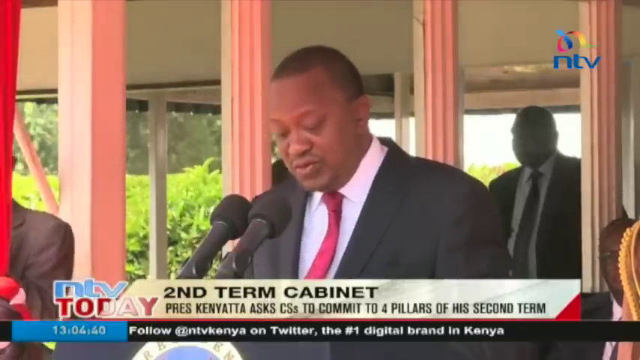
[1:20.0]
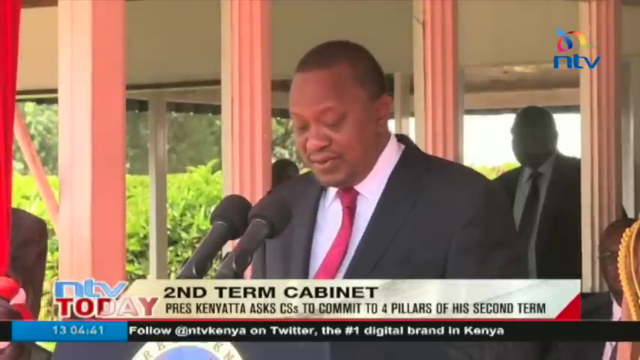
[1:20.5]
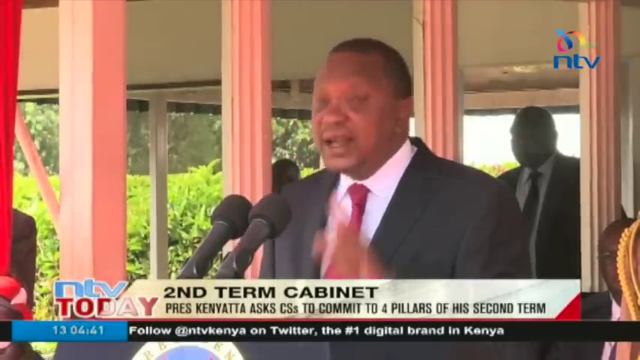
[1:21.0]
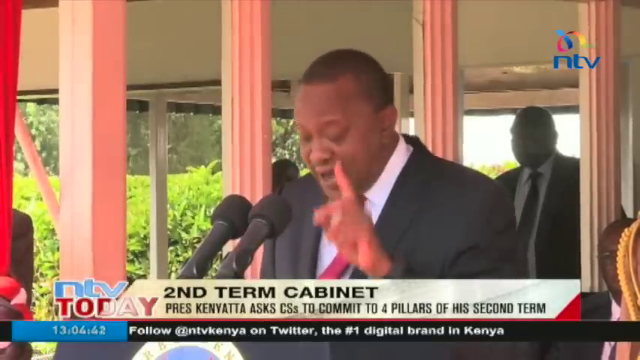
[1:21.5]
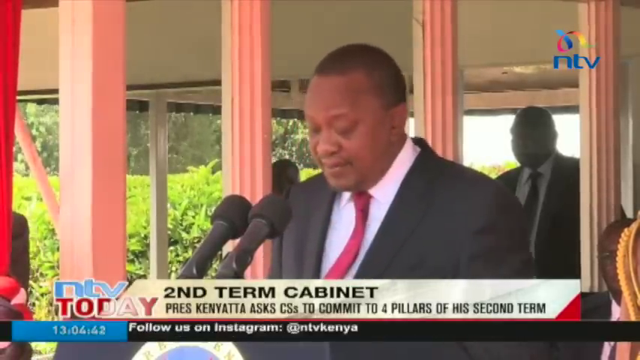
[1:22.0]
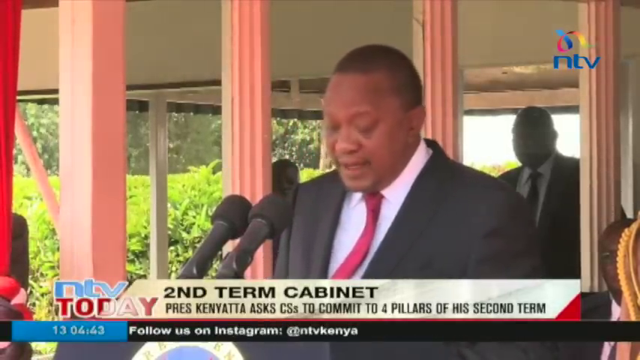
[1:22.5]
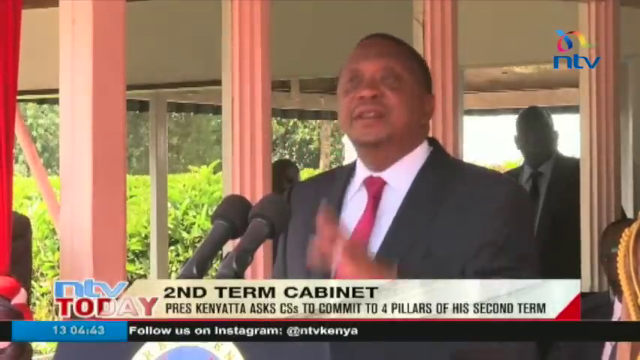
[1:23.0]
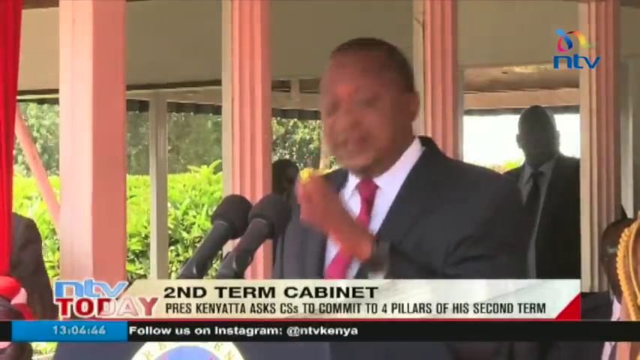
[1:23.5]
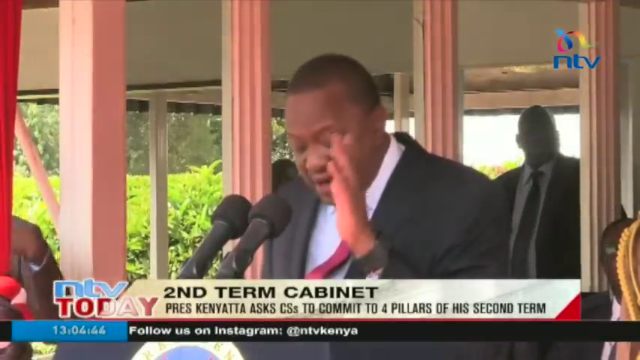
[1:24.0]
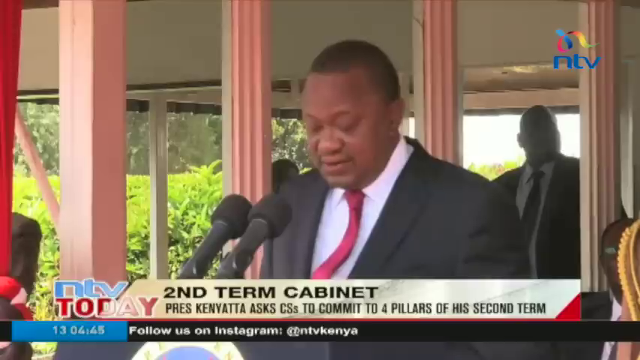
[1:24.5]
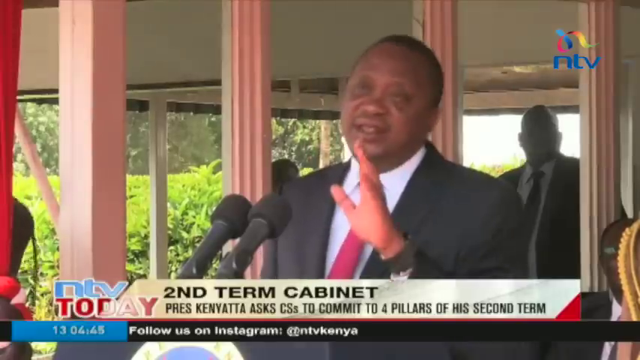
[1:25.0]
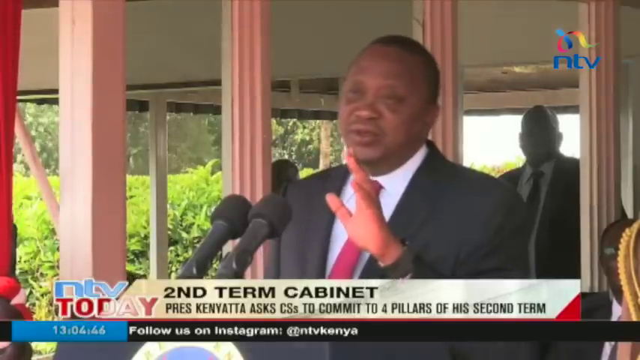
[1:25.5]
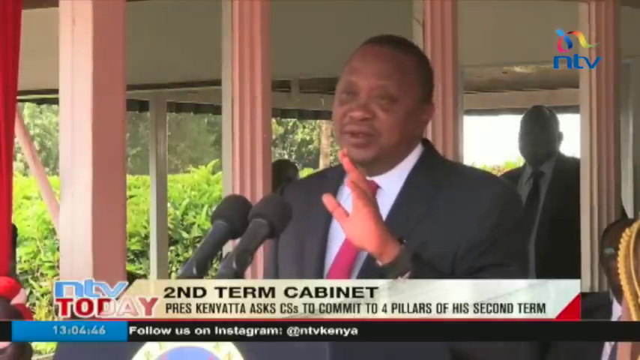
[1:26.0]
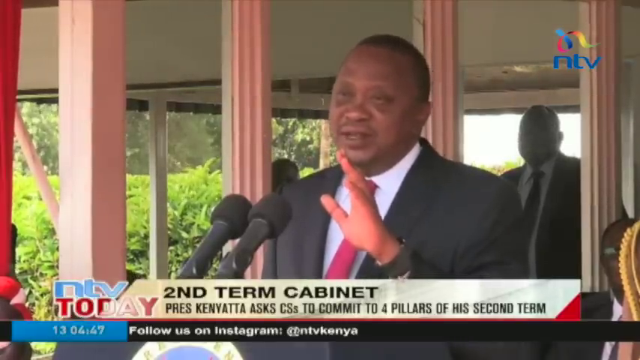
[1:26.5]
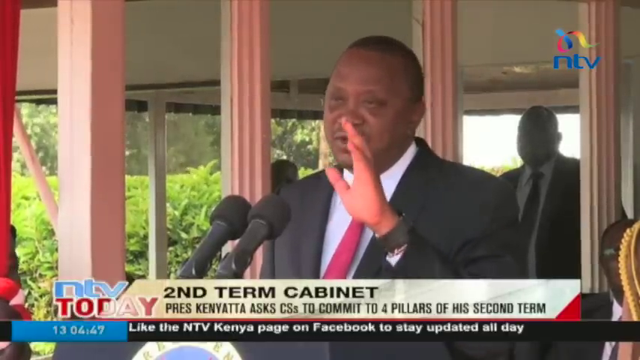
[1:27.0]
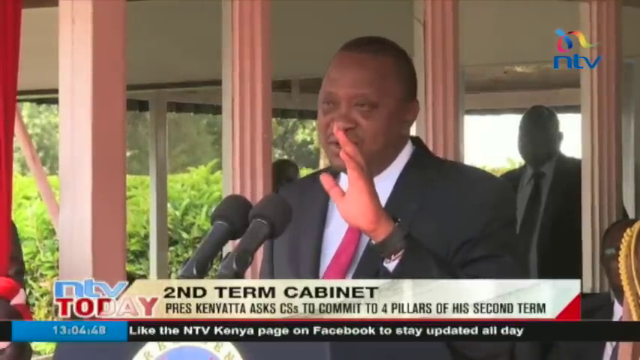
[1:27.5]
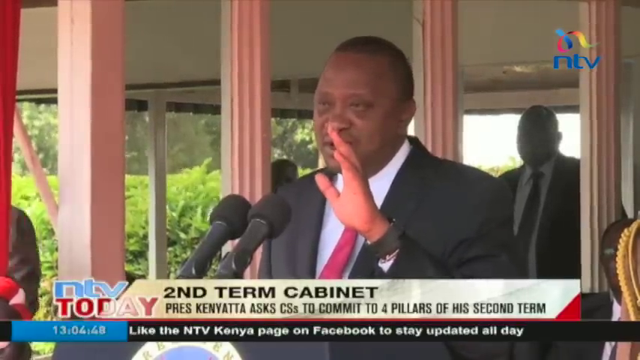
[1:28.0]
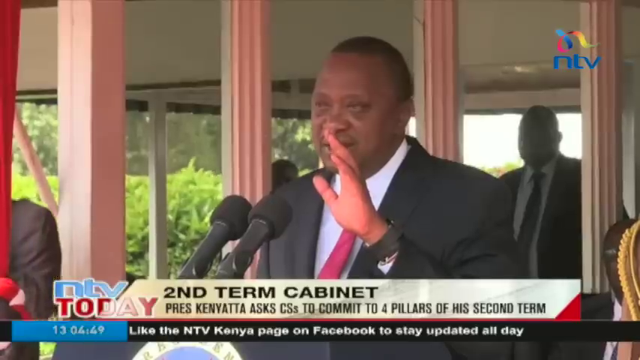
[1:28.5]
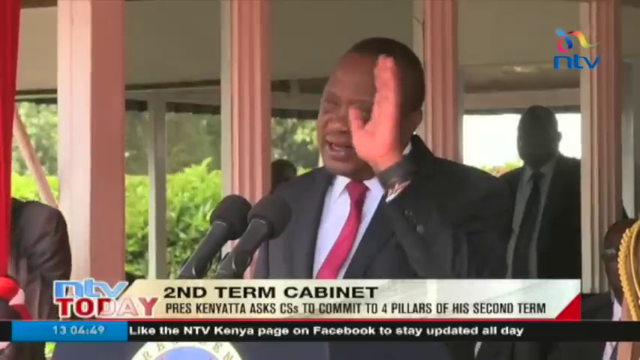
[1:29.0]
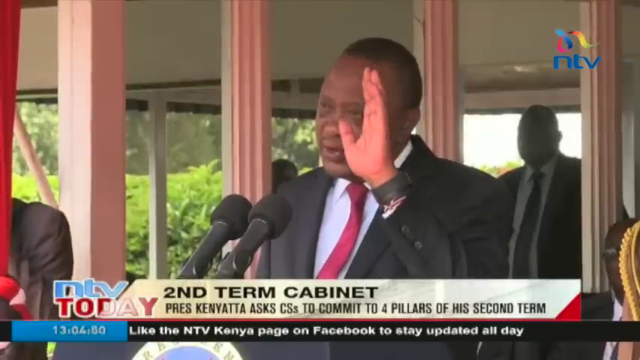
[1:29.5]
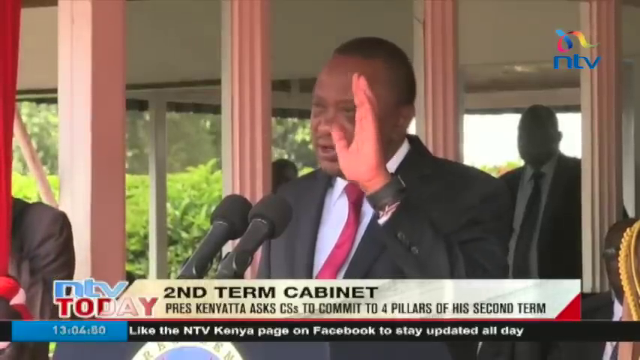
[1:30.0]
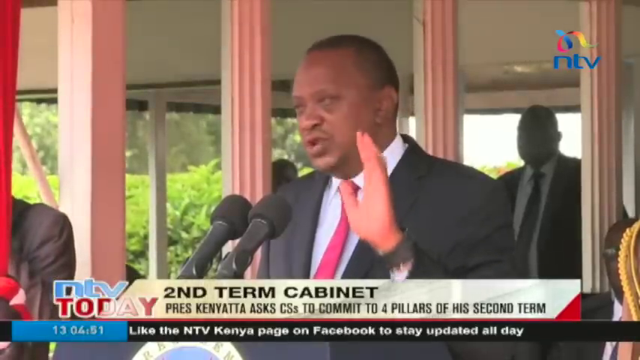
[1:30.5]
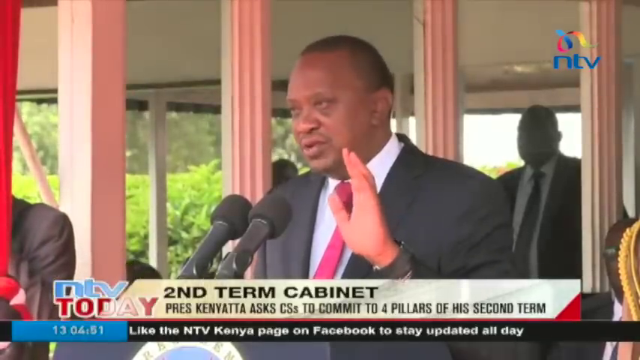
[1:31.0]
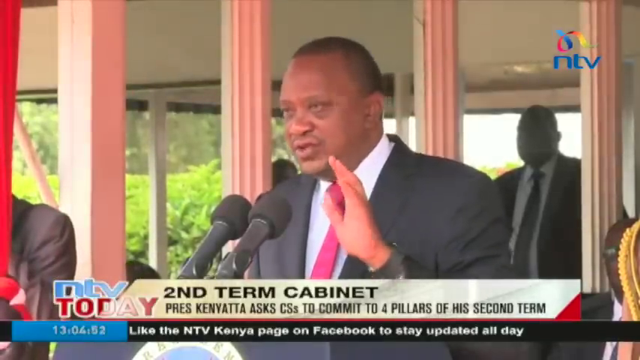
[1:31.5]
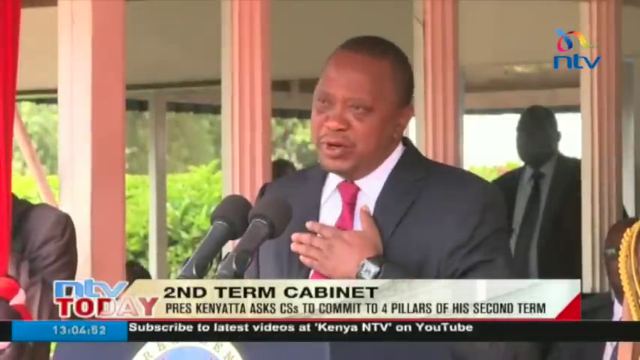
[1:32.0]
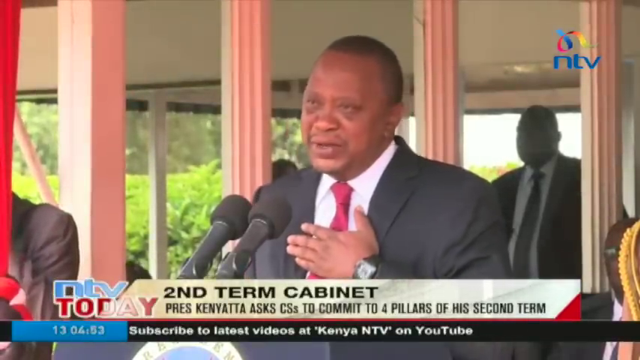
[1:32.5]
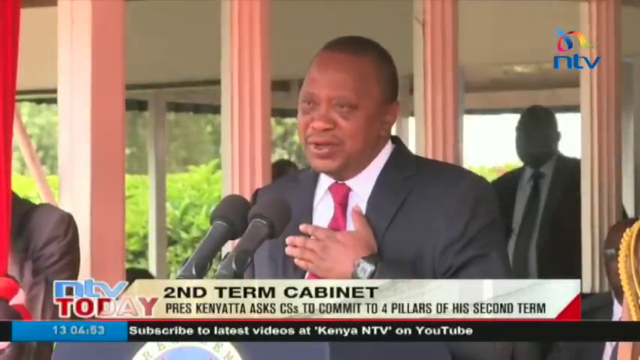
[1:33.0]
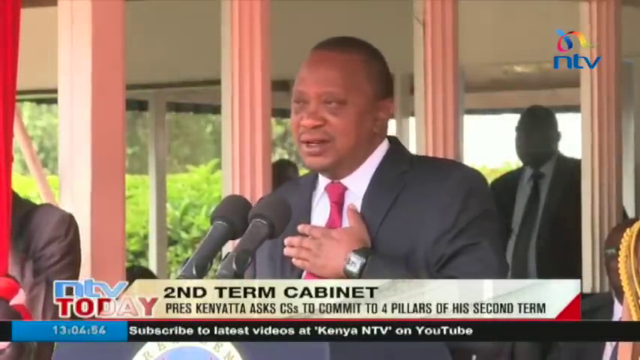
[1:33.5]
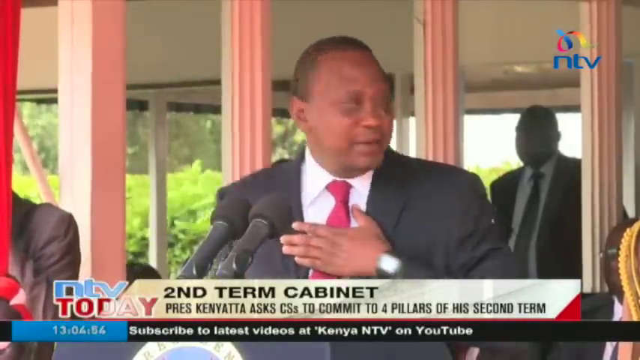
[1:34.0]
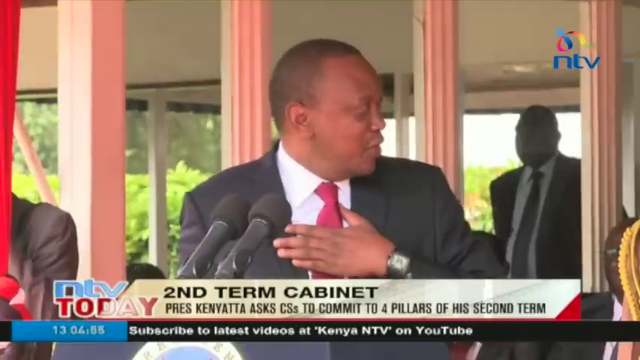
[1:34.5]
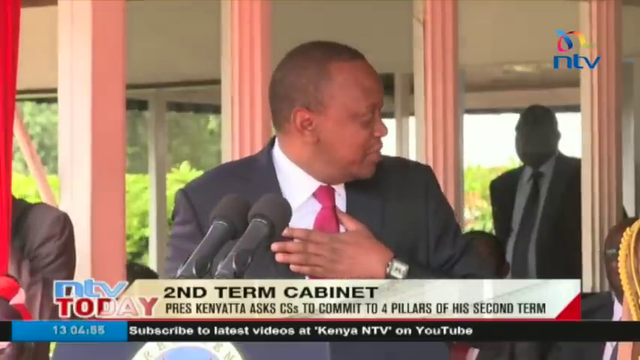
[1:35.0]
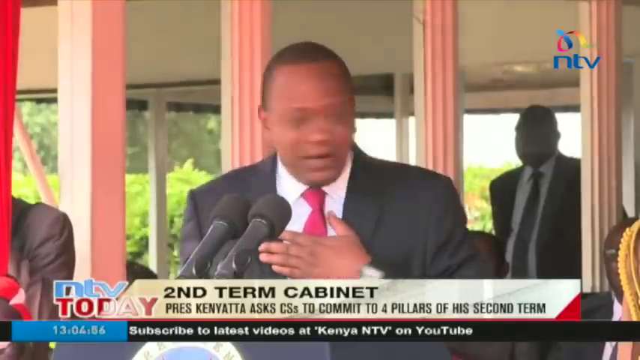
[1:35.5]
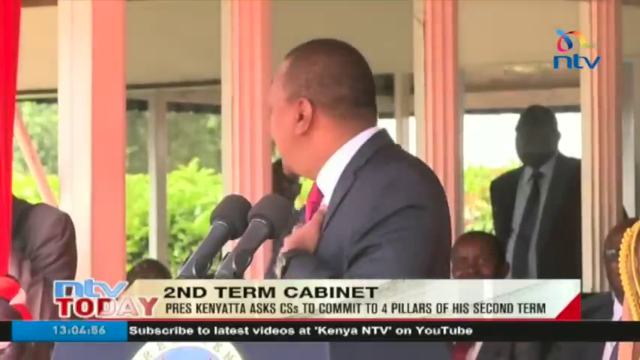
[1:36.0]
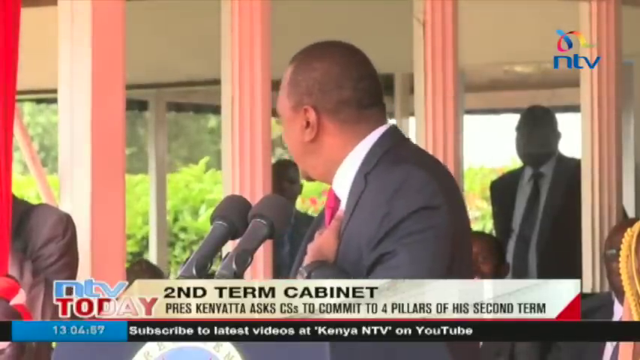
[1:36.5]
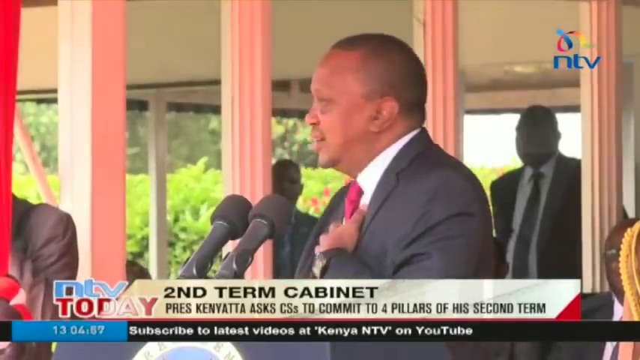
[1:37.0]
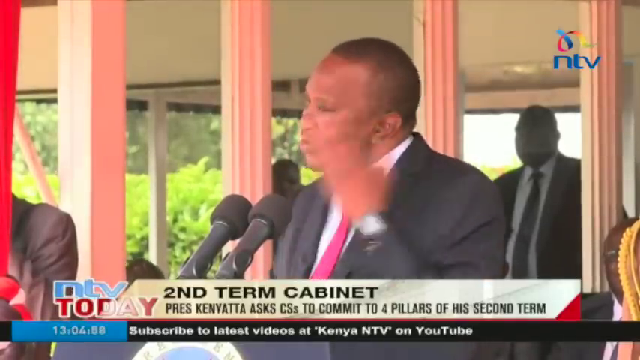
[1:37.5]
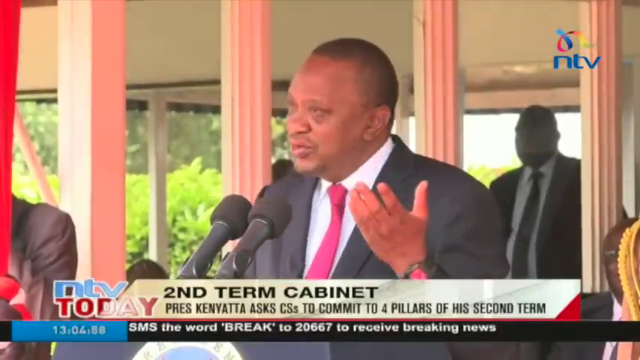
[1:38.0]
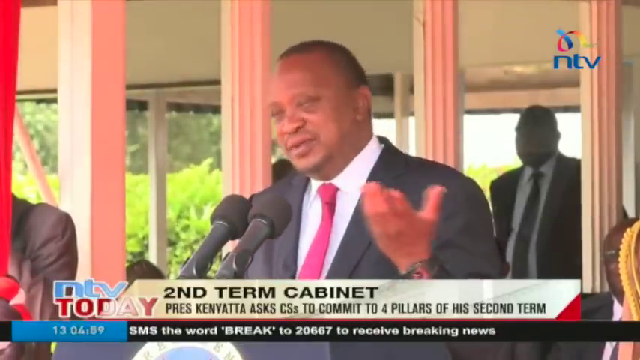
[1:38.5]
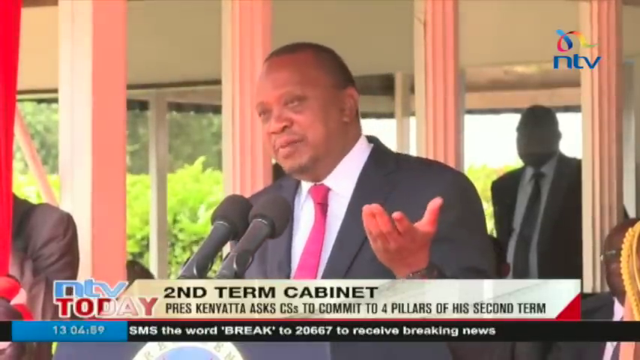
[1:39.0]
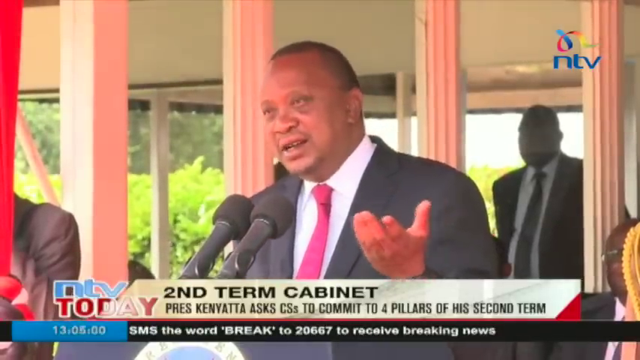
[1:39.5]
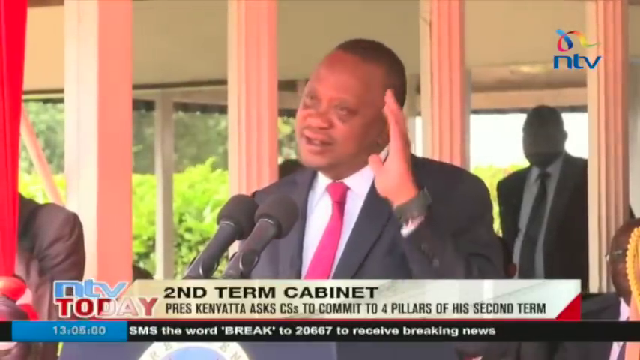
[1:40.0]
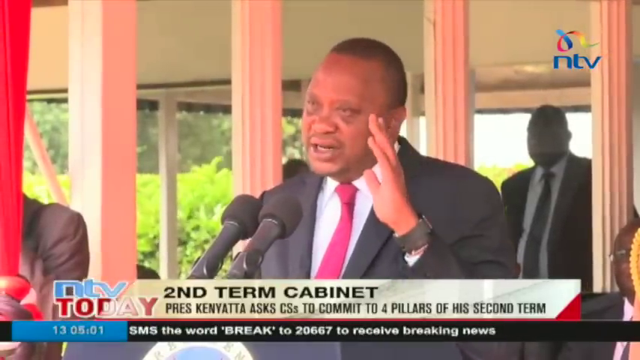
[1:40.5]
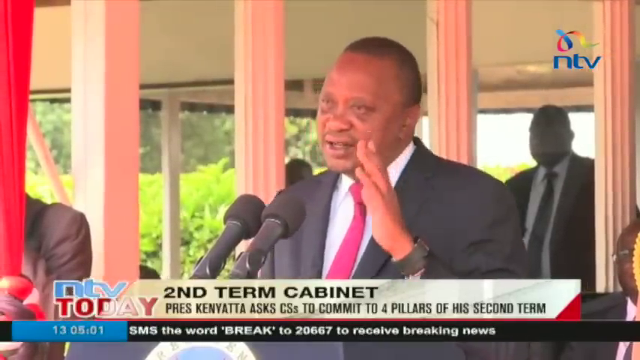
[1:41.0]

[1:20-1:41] The NTV today report continues with the second term cabinet story, with "second term cabinet" written in the headline below. President Kenyatta stands at the pulpit in front of the cabinet, addressing them, with two microphones in front of him. Many people are at the venue, which has a red theme. Text below reads "subscribe for latest videos at Kenya TV on YouTube." He keeps talking and makes gestures with his hands, while the people gathered in front of him, members of the cabinet, listen attentively.